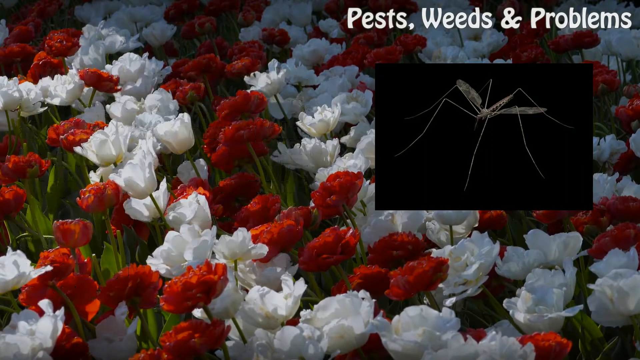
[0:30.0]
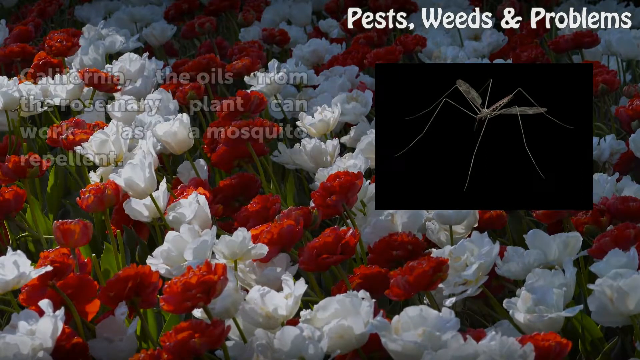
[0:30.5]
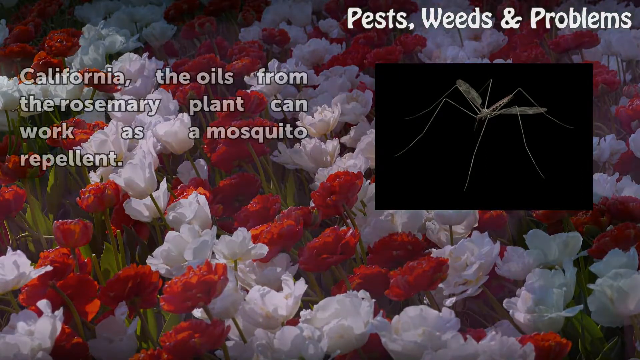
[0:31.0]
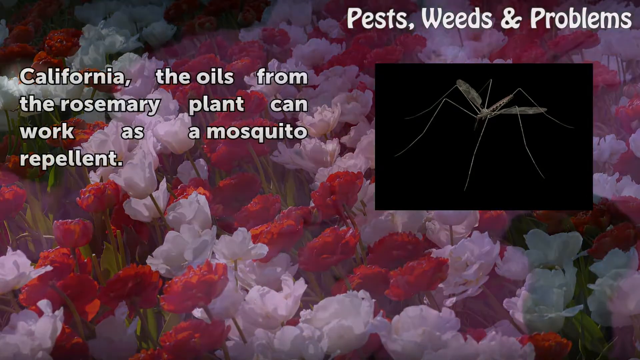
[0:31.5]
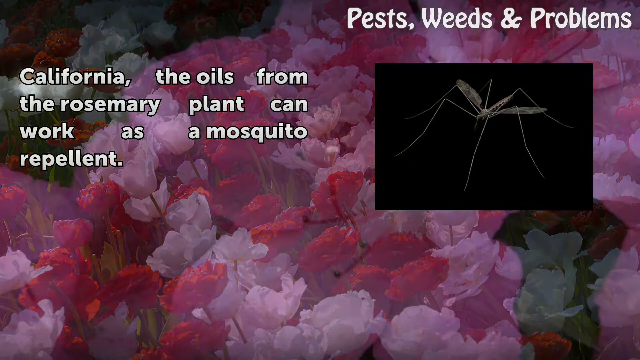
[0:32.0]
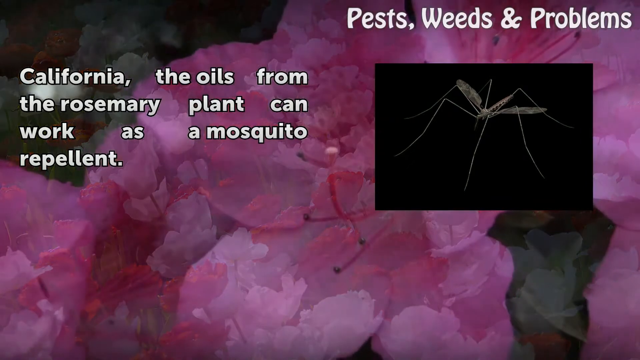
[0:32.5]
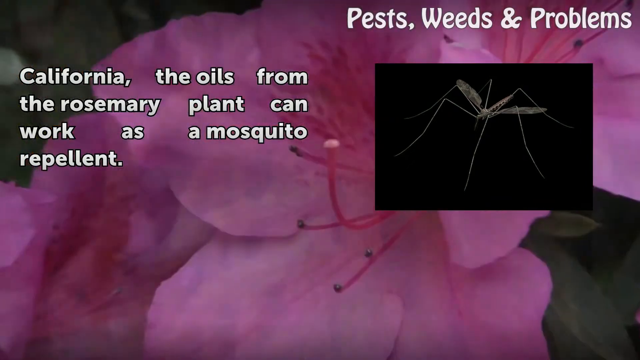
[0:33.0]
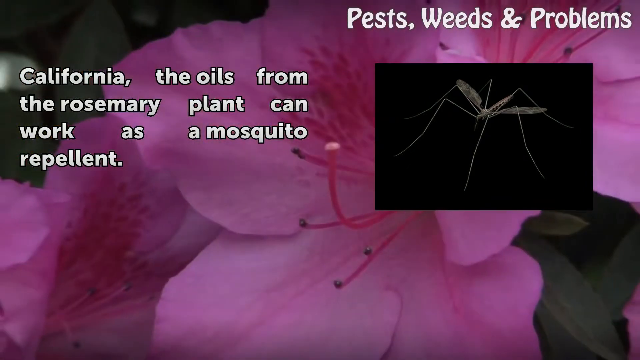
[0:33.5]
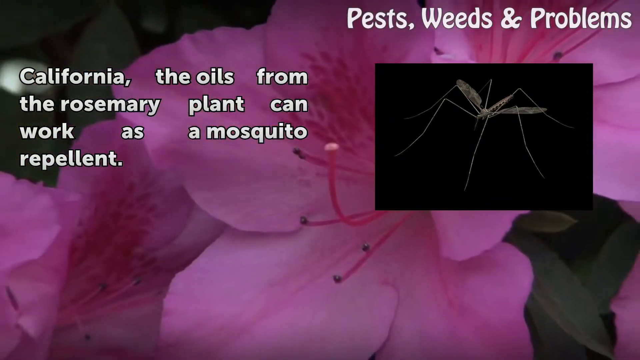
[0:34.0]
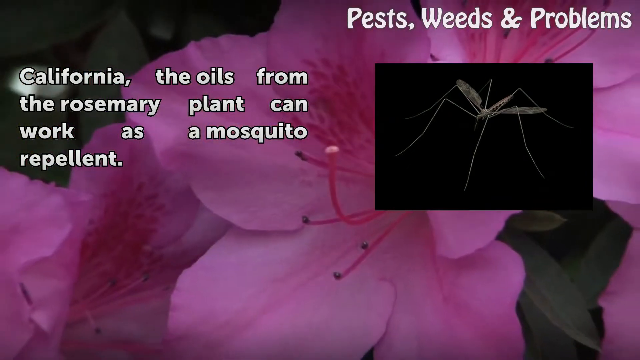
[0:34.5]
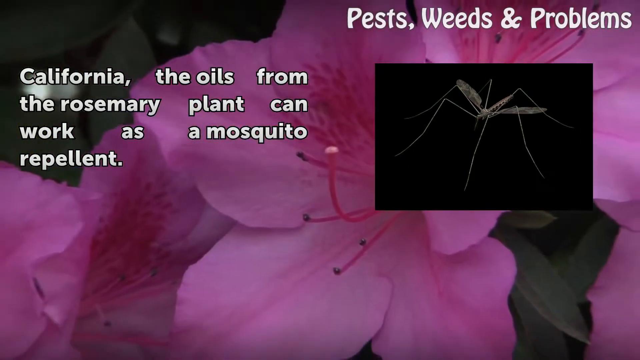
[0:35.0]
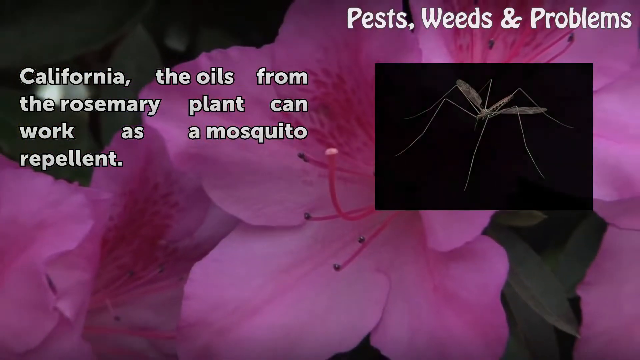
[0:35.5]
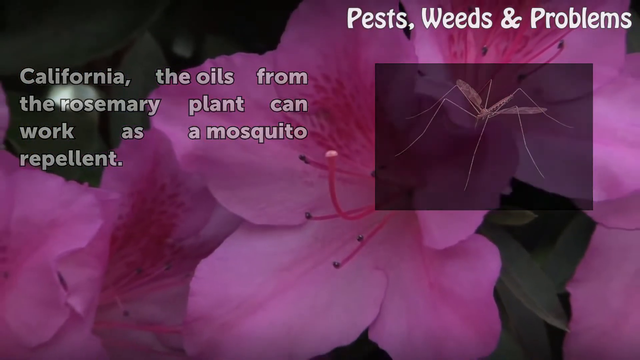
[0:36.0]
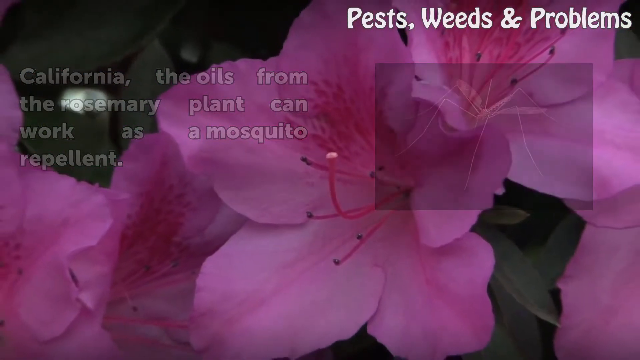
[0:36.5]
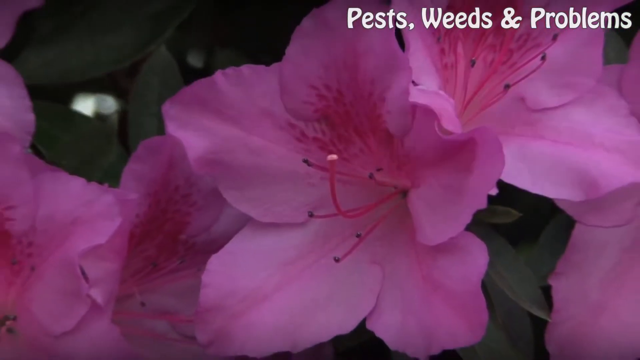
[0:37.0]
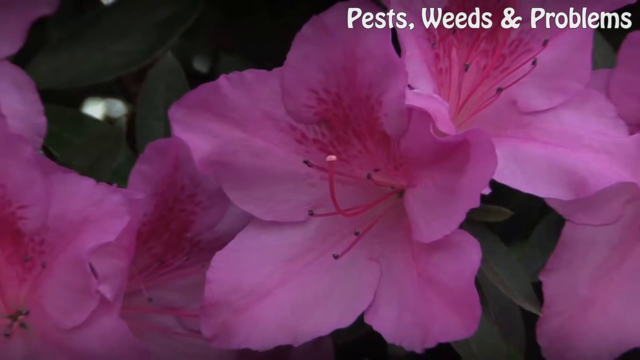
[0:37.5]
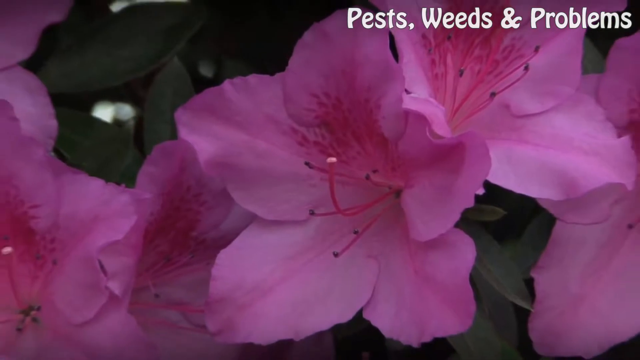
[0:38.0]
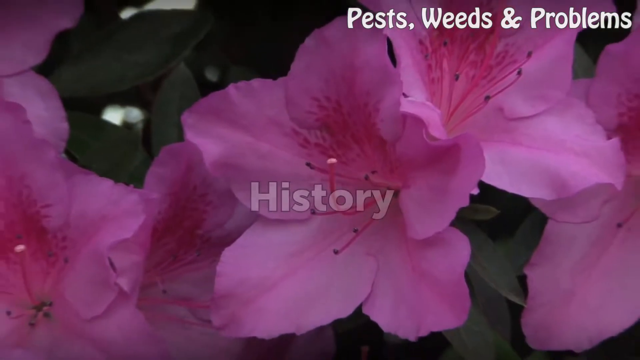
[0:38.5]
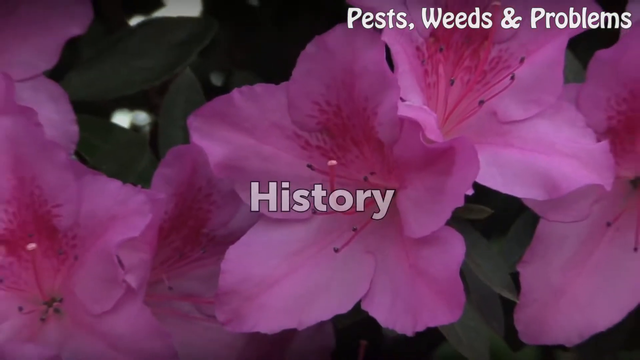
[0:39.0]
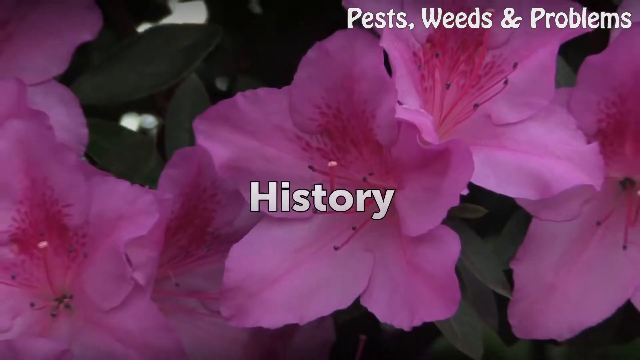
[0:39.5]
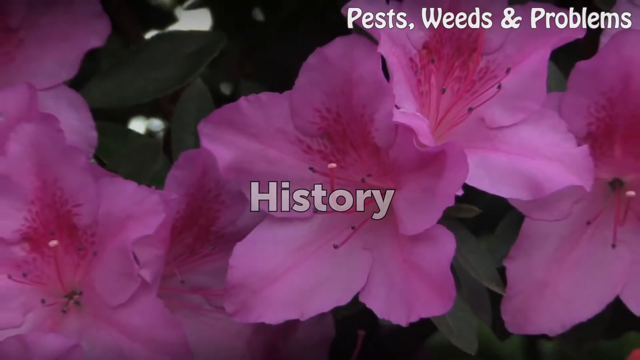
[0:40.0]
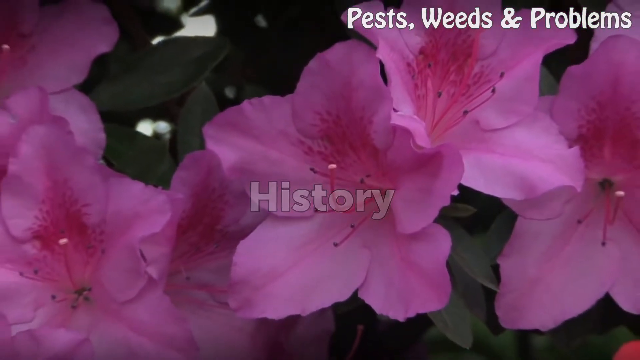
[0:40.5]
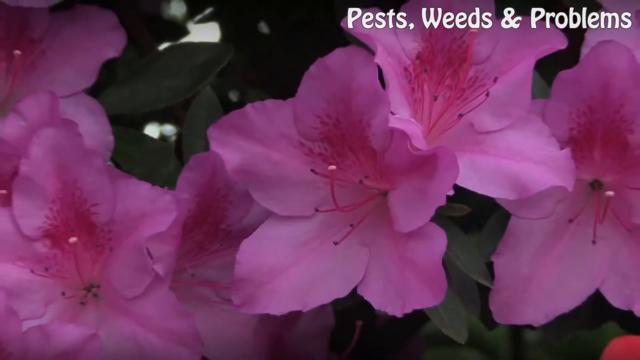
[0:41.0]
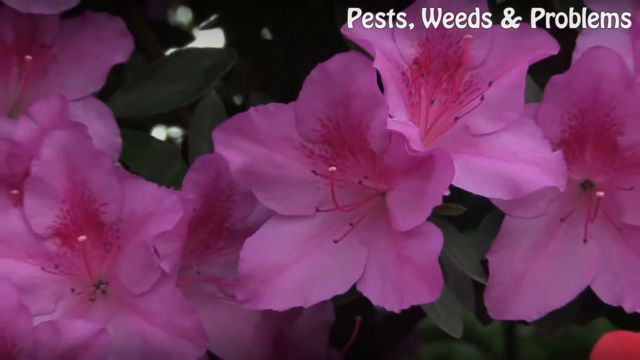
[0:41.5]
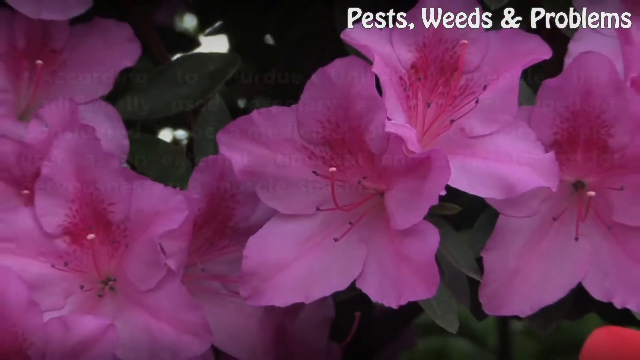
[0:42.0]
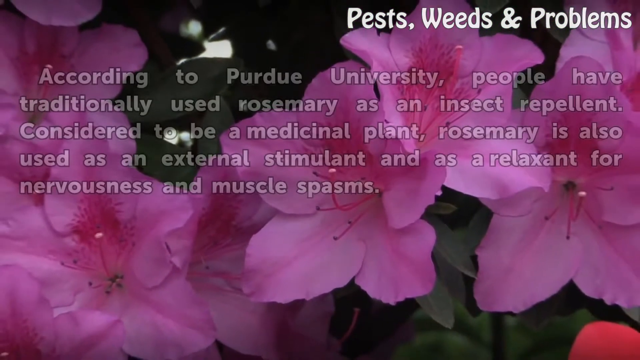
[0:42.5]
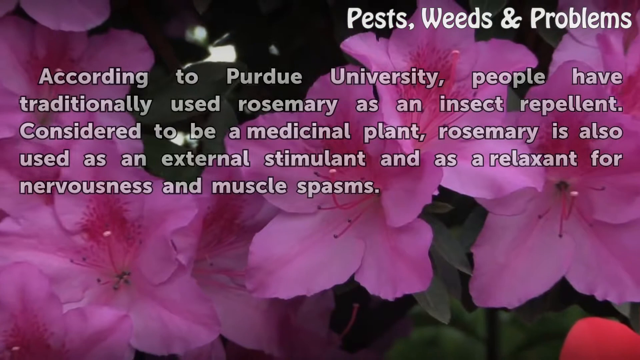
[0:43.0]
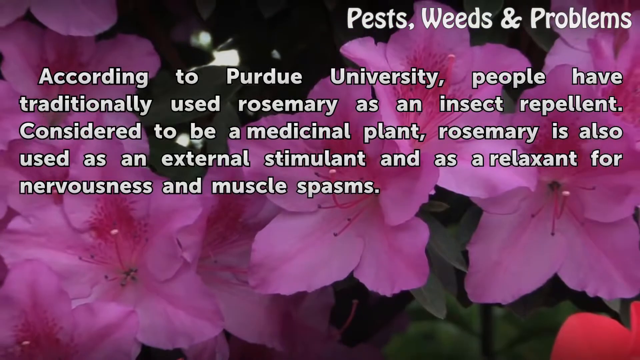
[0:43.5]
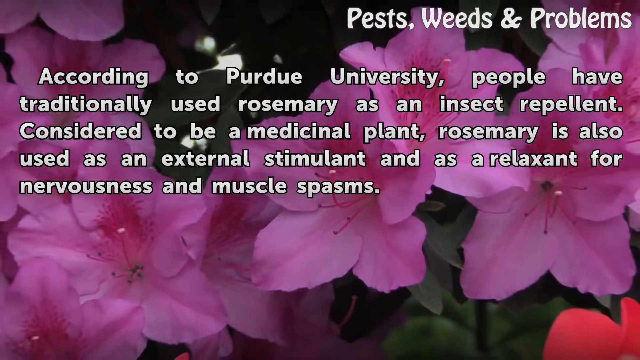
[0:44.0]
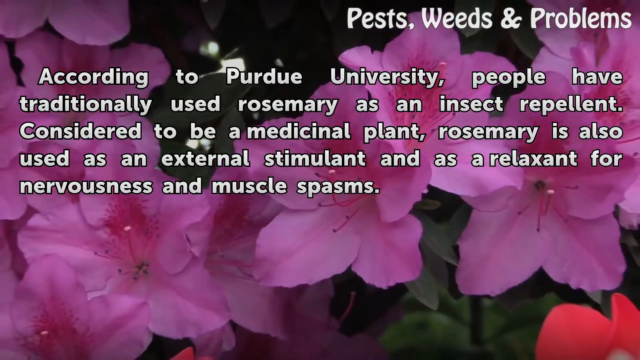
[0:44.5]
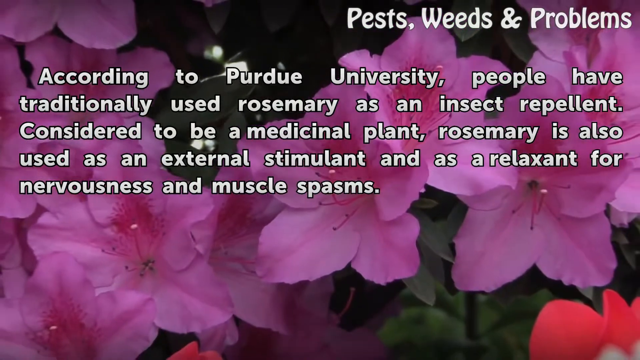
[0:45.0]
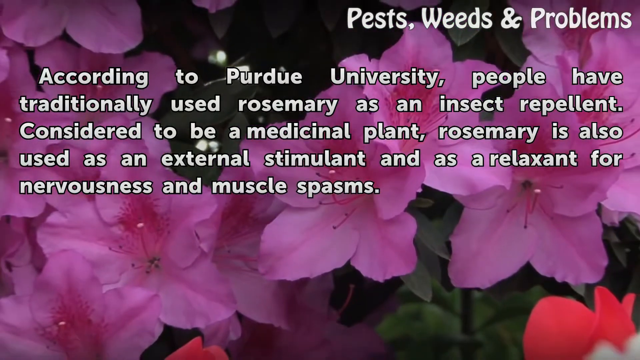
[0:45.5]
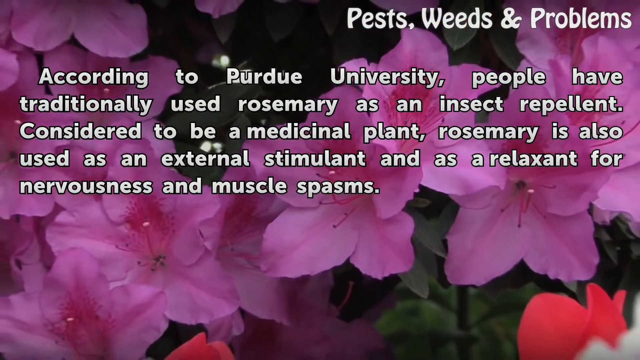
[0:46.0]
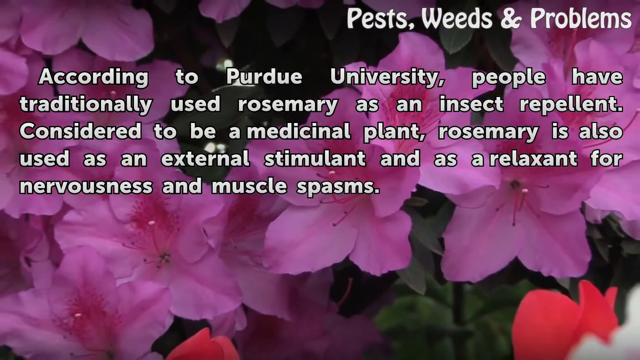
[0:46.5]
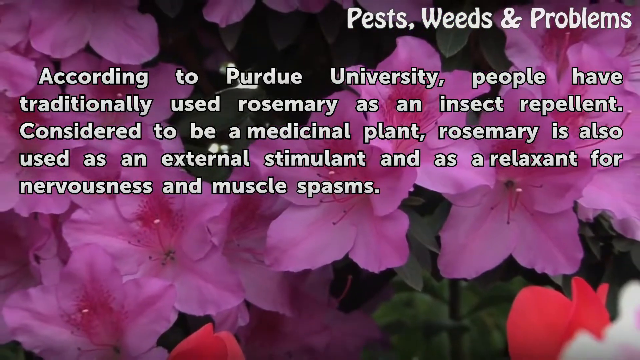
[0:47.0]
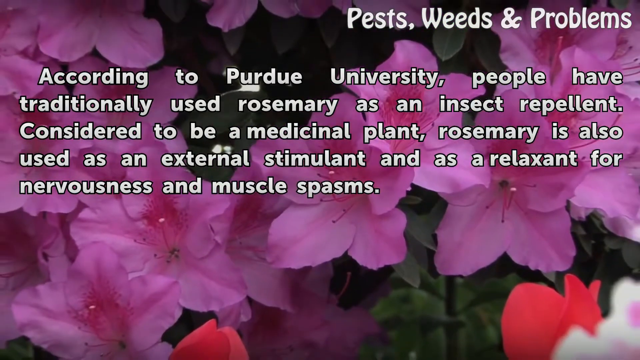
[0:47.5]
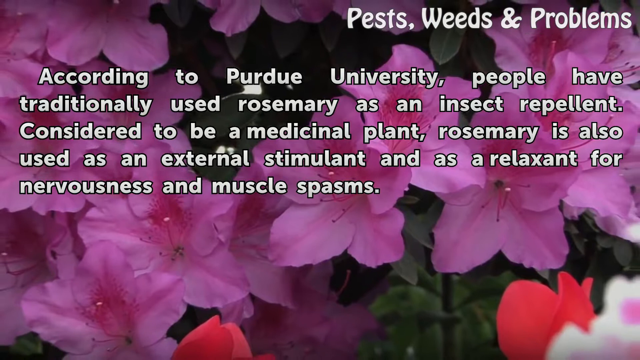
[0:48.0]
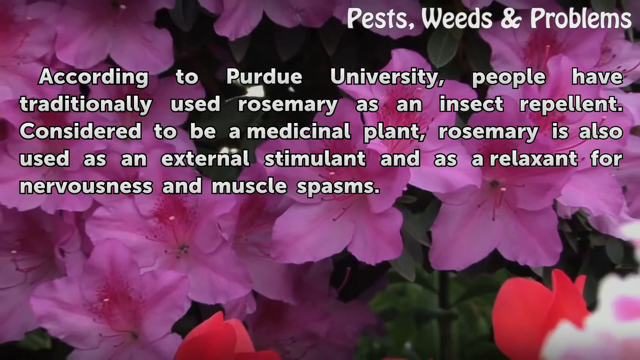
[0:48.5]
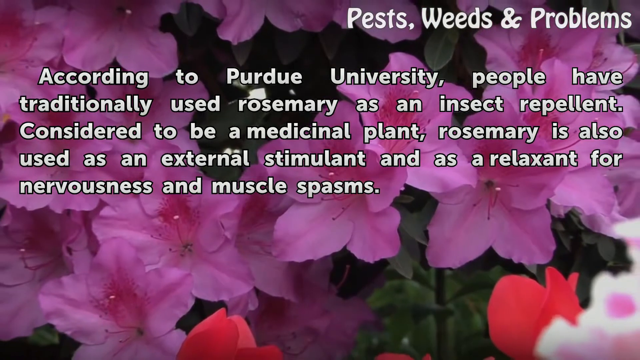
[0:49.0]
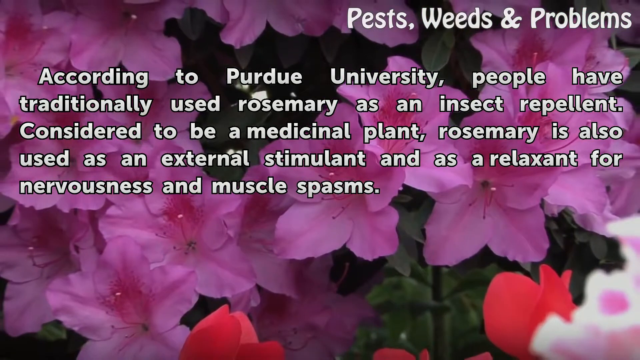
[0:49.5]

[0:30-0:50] The image of the mosquito remains on the right side, with "pests, weeds, and problems" above it. On the left side, white text reads "the oils from the rosemary plant can work as a repellent." The background then changes from the rows of flowers to all pink, covering everything except the upper left corner, as the view slowly zooms out. The words and the picture of the mosquito go away. The flowers are light pink with a little dark pink inside and long pink stems; there are roughly three across from left to right and one on the right side, with green leaves in the top right. The view slowly pans out, and in the center "history" appears in white with a black border. Then white text with a black border reads: "According to Purdue University, people have traditionally used rosemary as an insect repellent. Considered to be the medicinal plant, rosemary is also used as an external stimulant and as a relaxant for nervousness and muscle spasms," while the view keeps slowly zooming out from the pink flowers.